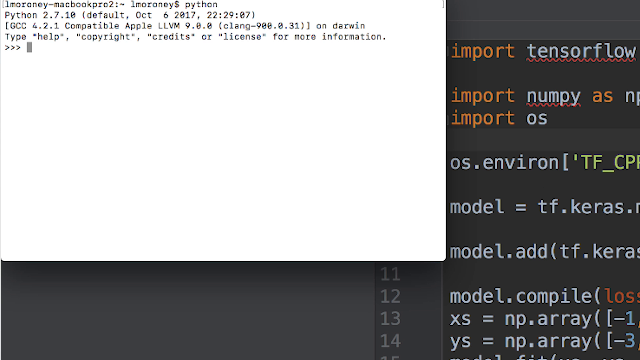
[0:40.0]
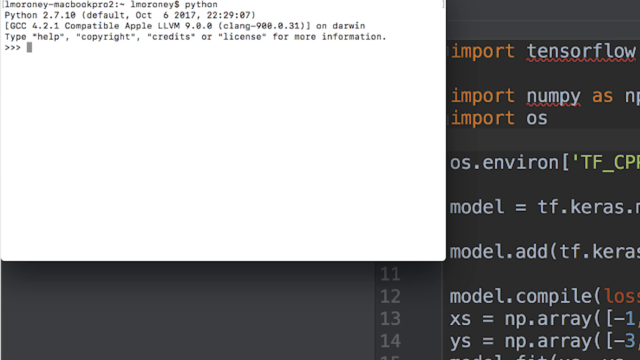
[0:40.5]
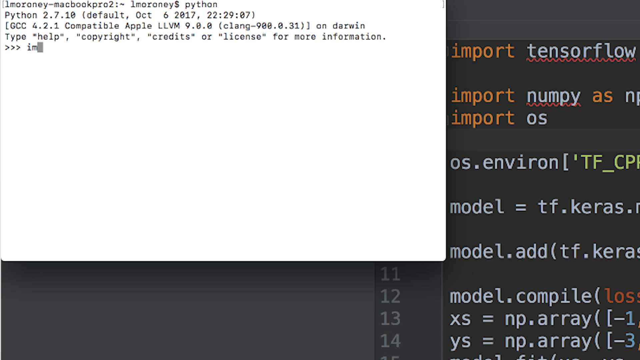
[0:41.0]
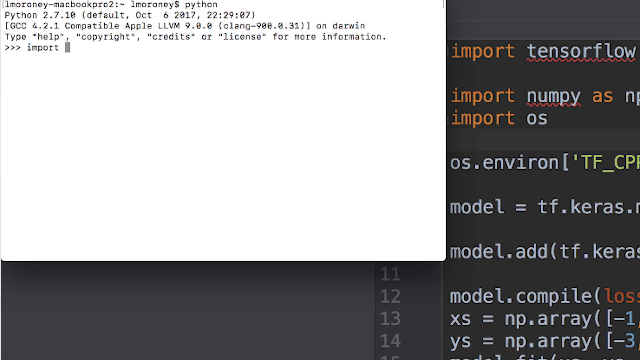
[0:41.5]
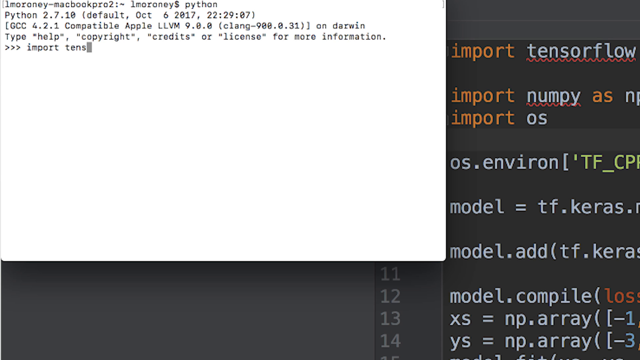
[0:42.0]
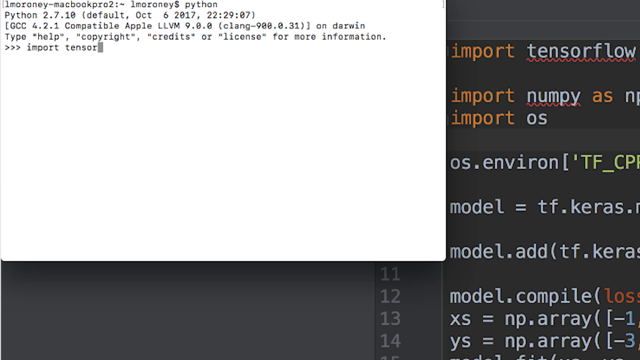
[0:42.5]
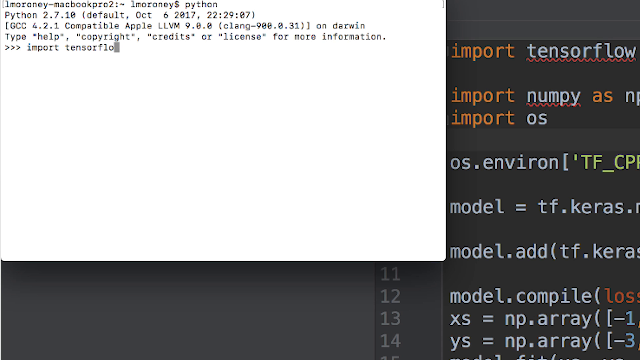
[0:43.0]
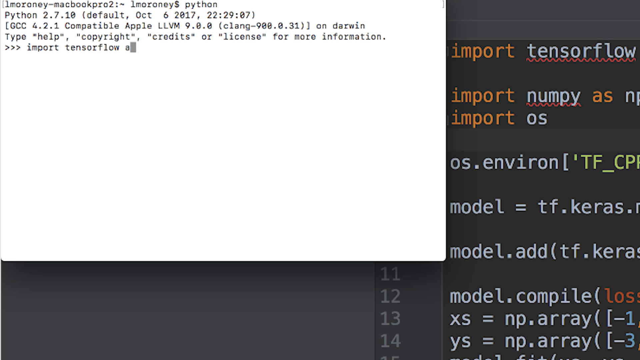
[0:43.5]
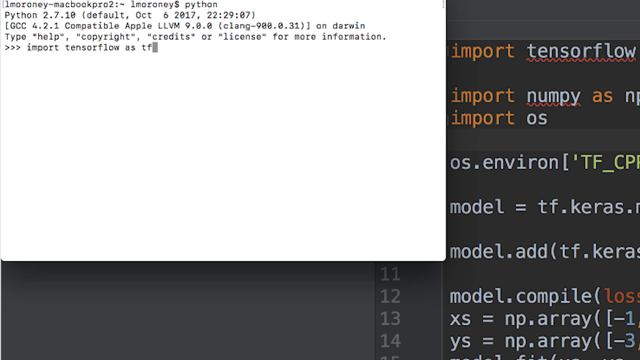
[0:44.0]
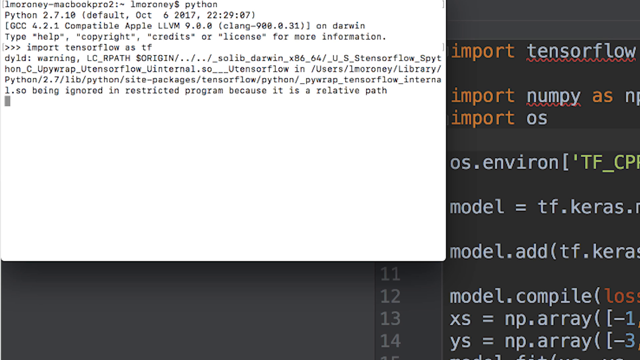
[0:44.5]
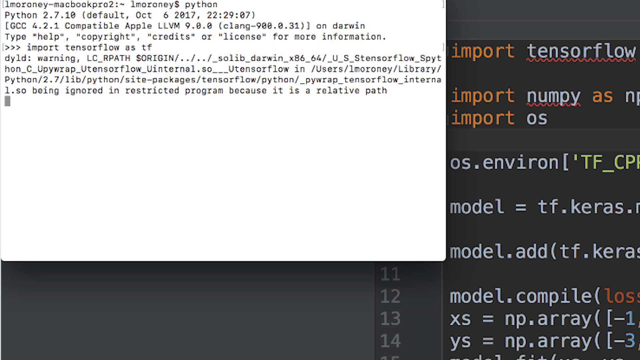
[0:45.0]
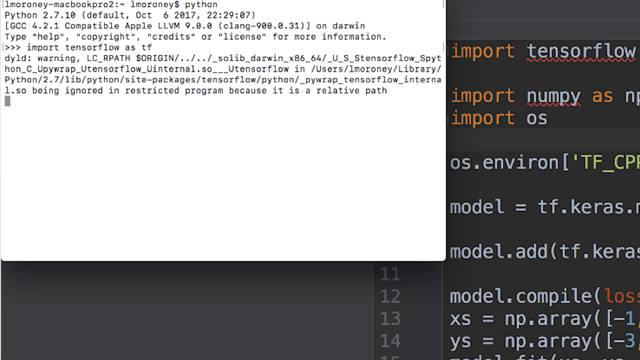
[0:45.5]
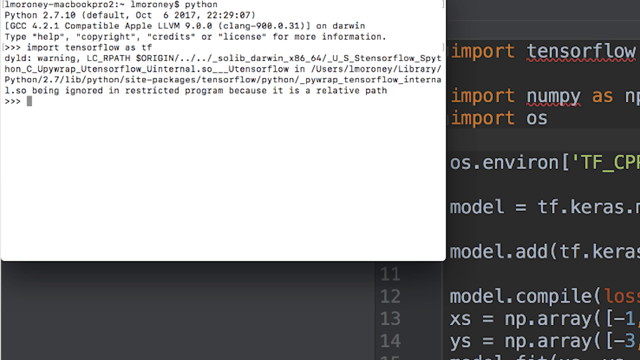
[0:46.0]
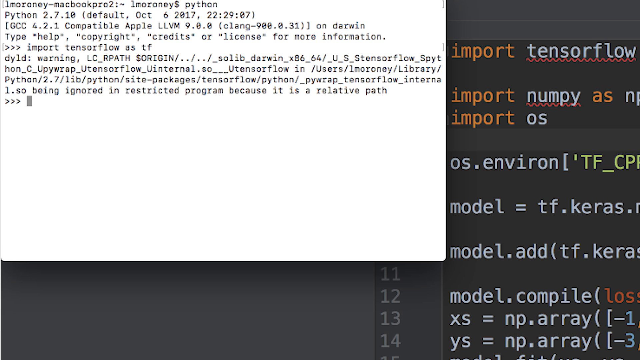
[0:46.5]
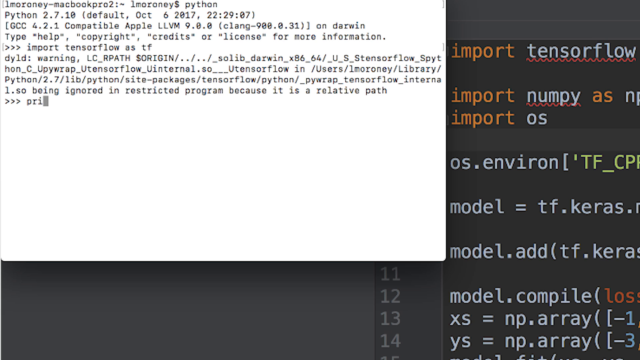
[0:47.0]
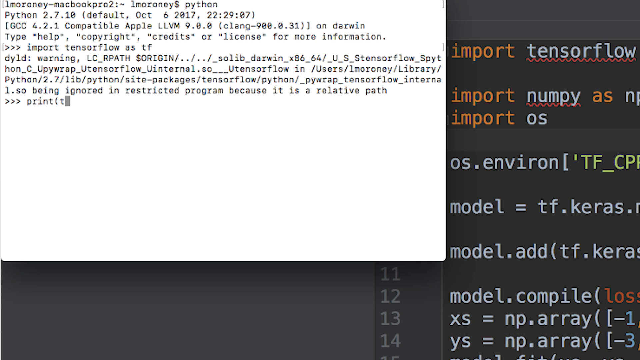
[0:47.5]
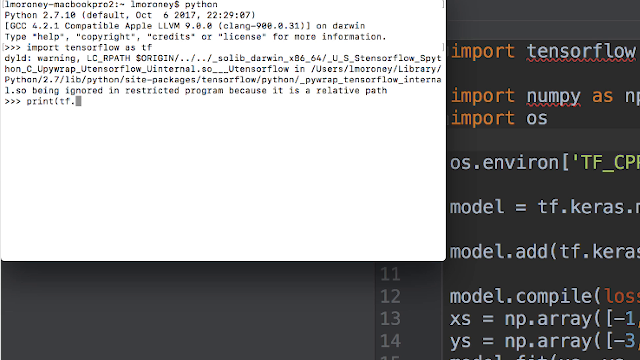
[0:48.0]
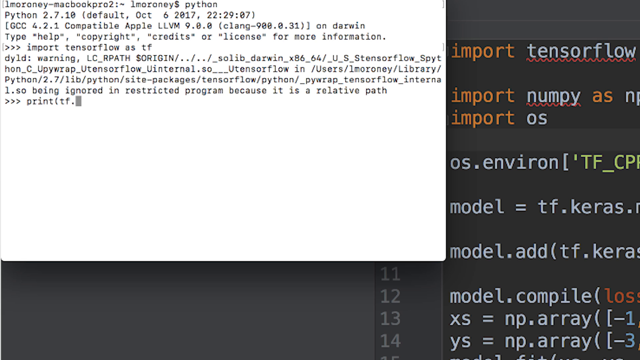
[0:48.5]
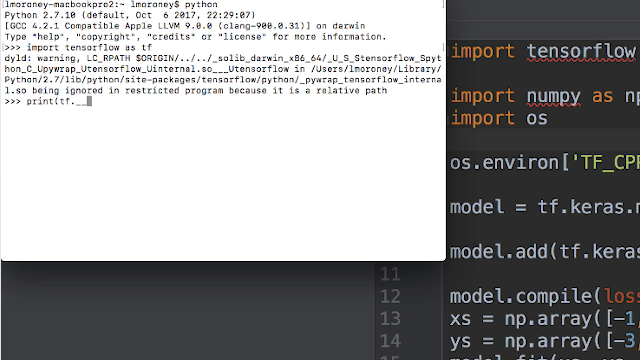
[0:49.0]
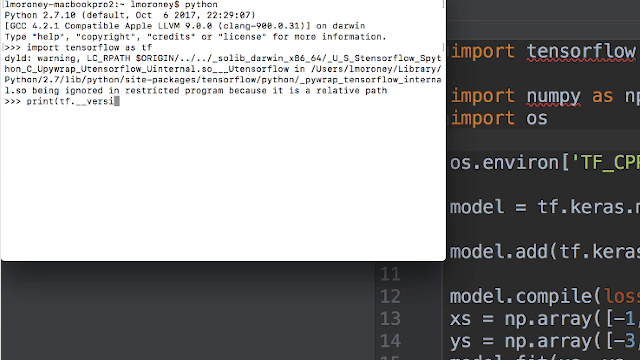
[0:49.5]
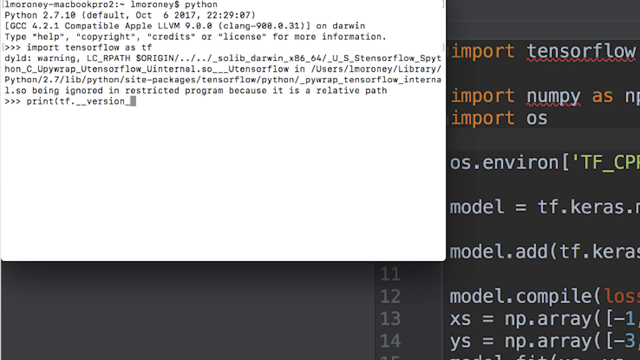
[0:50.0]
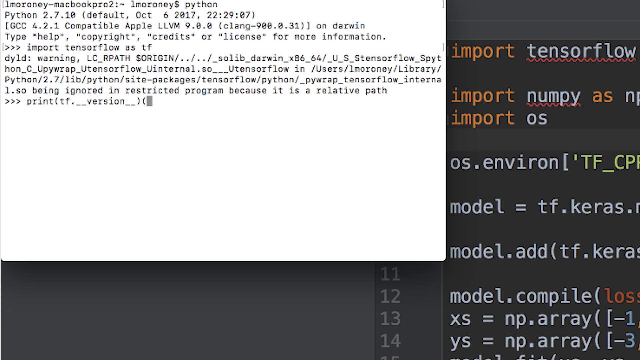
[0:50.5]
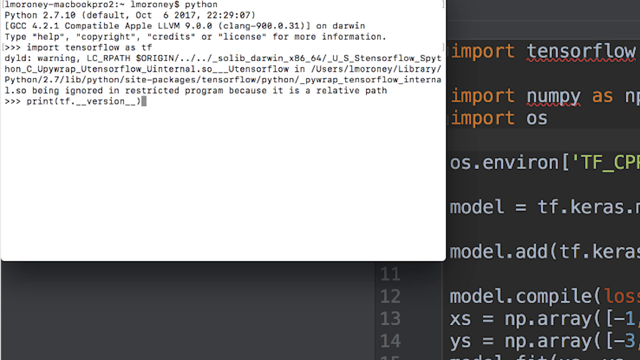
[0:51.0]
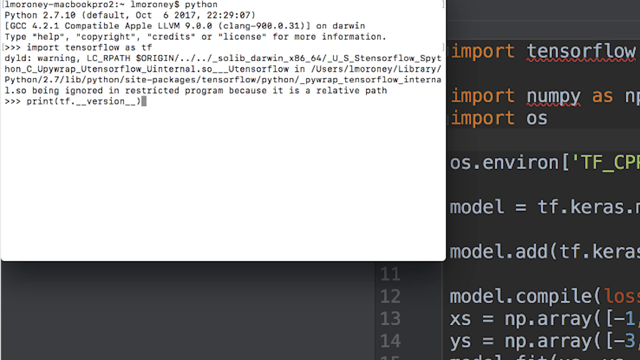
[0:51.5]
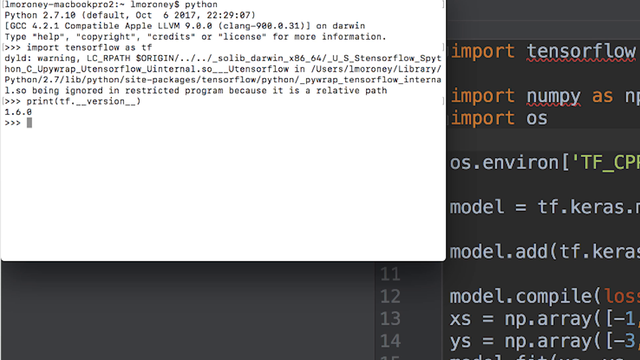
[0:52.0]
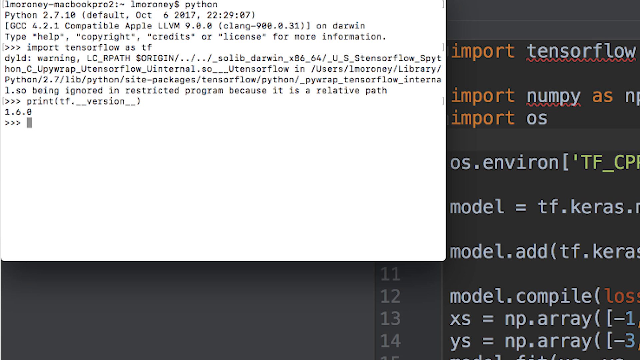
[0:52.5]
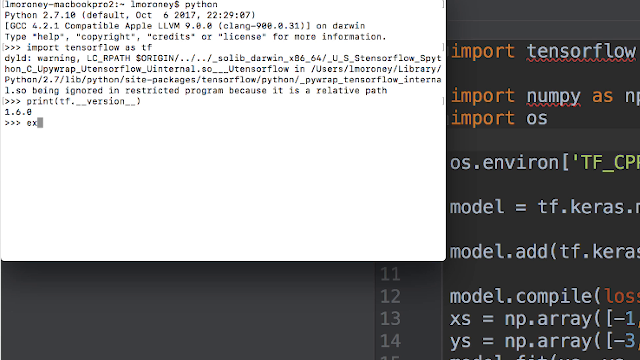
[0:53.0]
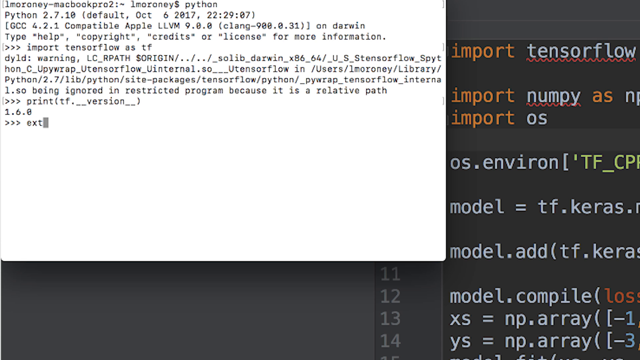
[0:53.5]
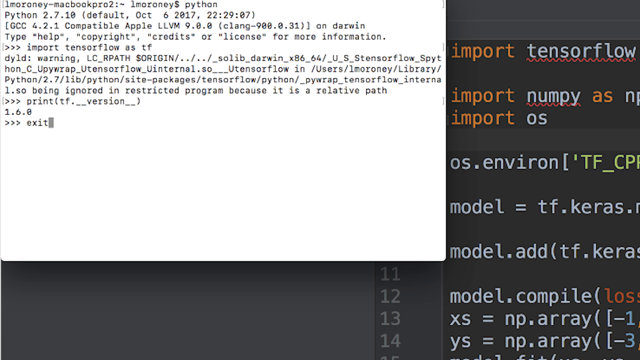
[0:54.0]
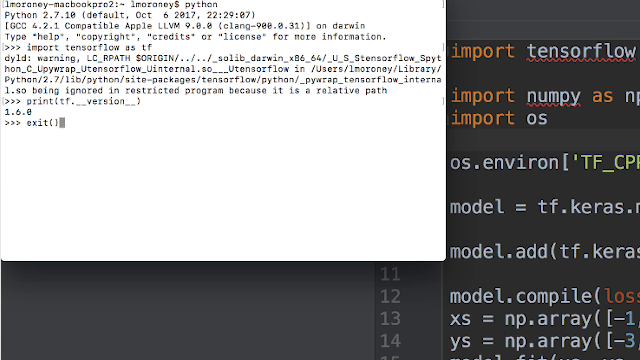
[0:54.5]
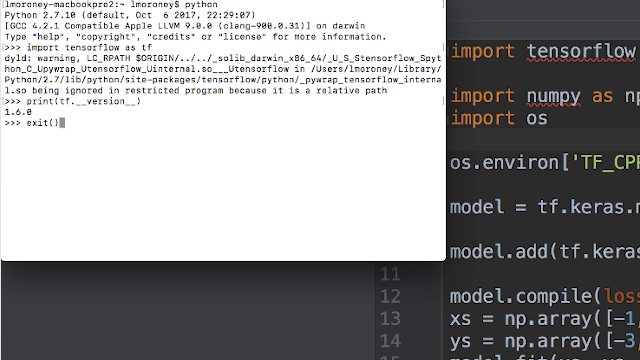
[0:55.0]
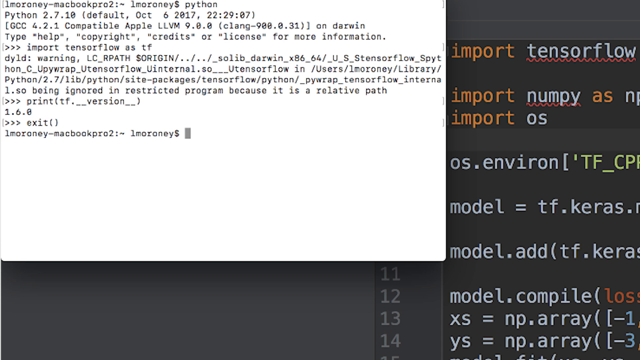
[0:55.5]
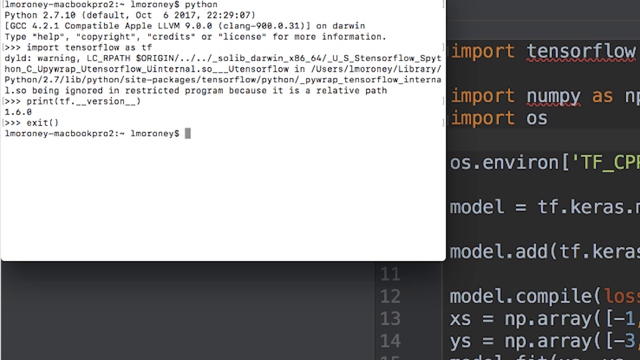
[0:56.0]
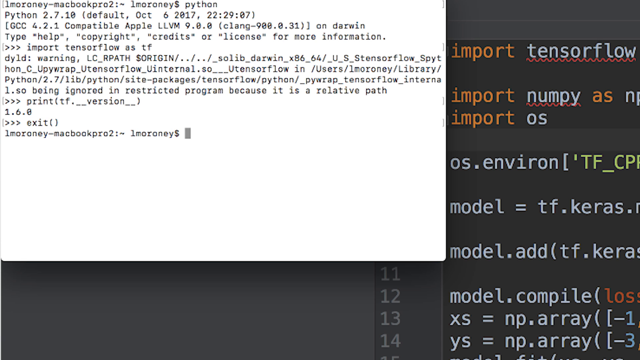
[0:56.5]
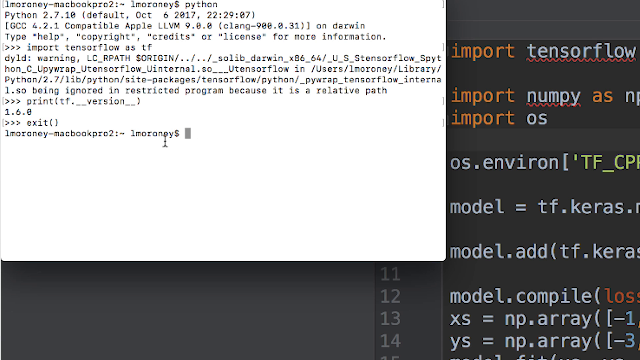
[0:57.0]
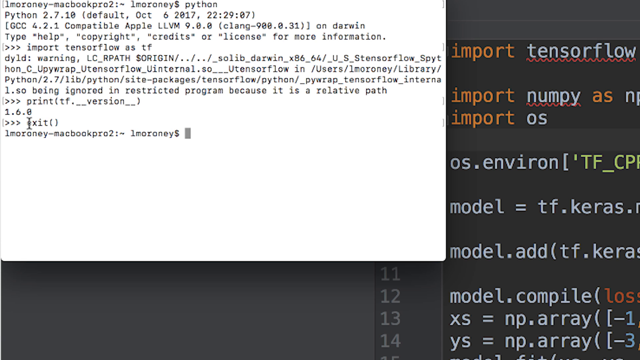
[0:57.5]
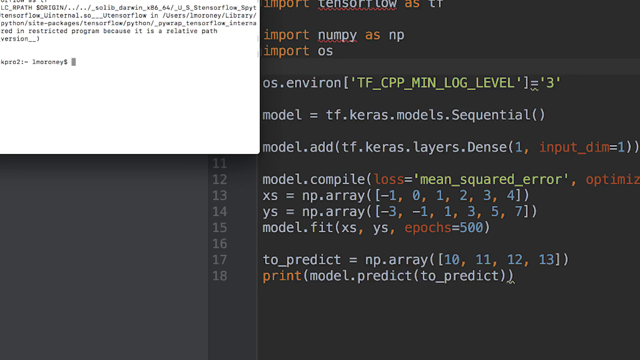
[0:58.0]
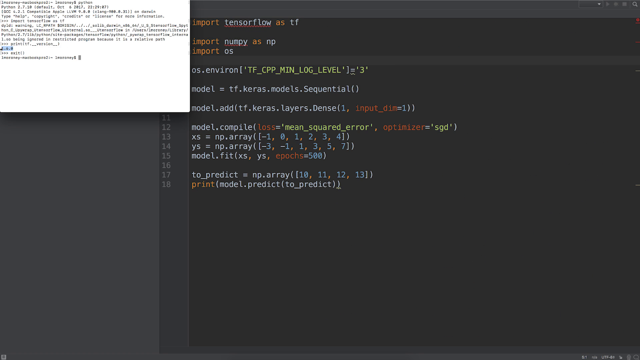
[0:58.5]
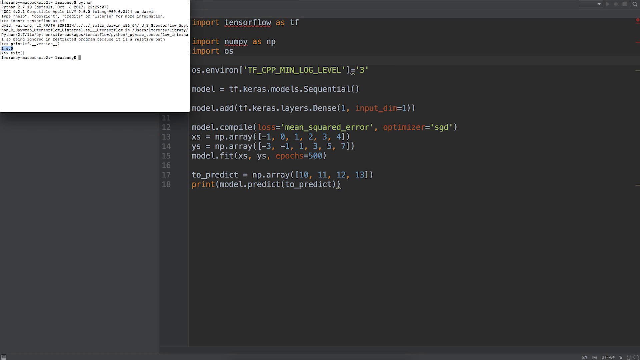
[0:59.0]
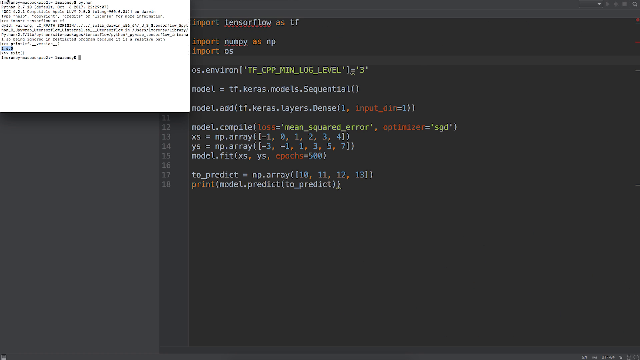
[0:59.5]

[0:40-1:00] He types an import of TensorFlow. Moving past the black-and-gray code screen, he zooms in to a very white screen and types code importing TensorFlow as tf, after which a lot of other code loads. He then types "print tf.version" and then "exit," and more code appears. He zooms slightly out of the white screen and then right back into it, so most of the screen is white with the code he is creating.